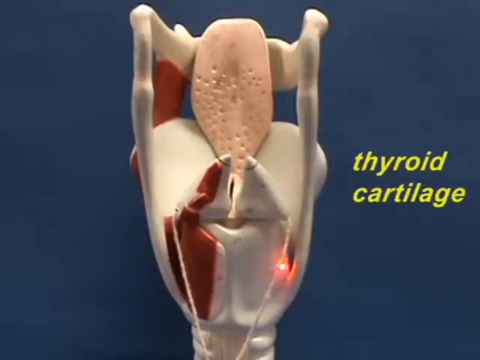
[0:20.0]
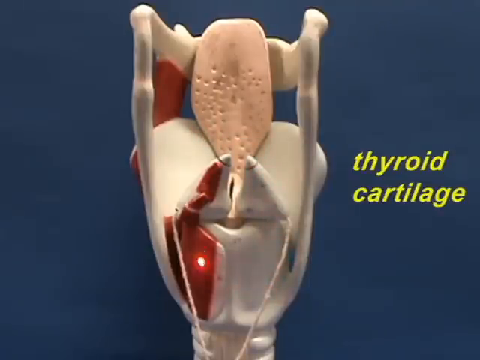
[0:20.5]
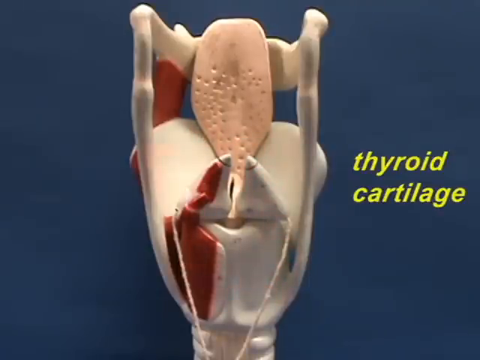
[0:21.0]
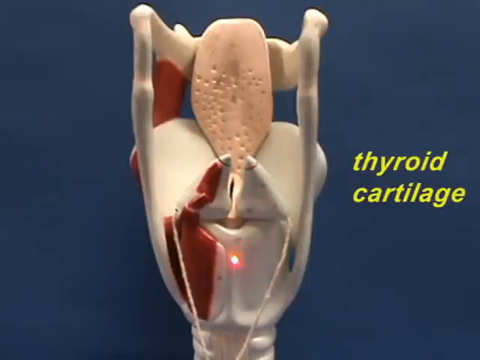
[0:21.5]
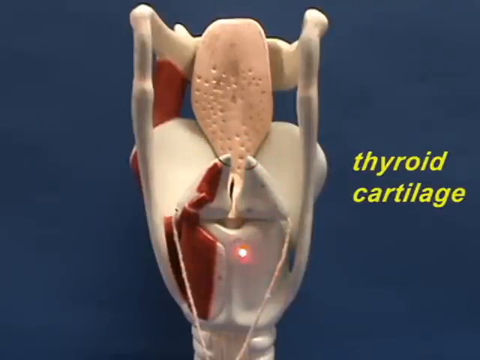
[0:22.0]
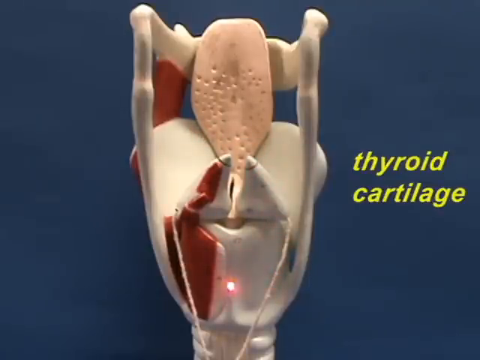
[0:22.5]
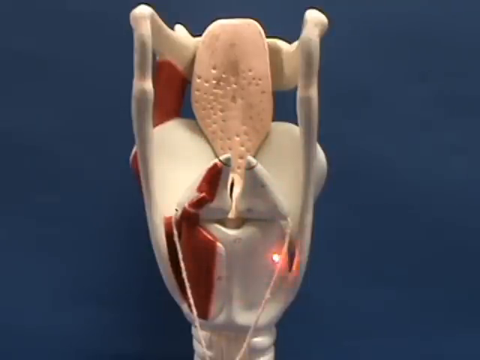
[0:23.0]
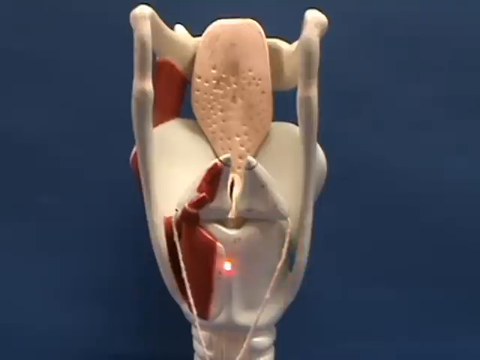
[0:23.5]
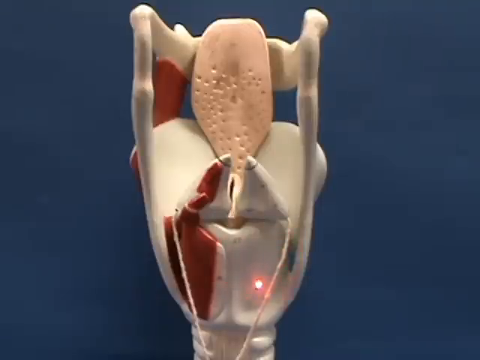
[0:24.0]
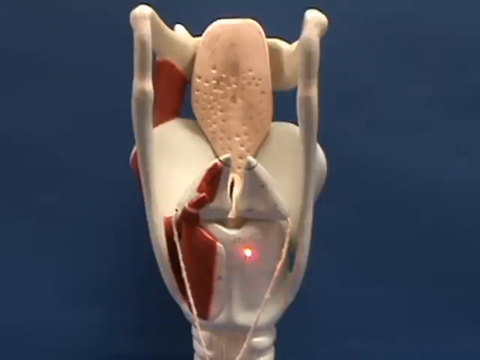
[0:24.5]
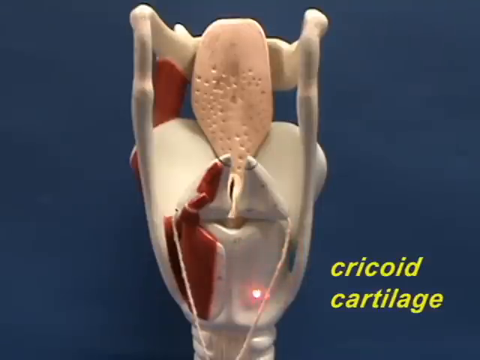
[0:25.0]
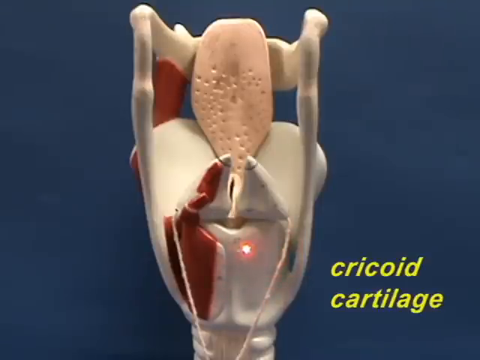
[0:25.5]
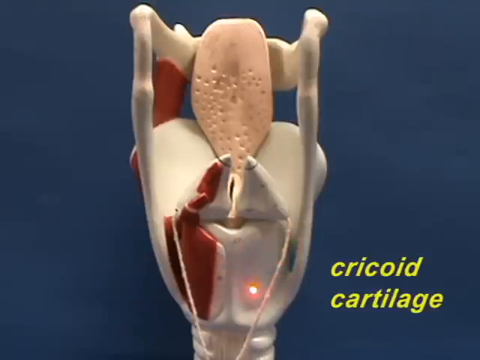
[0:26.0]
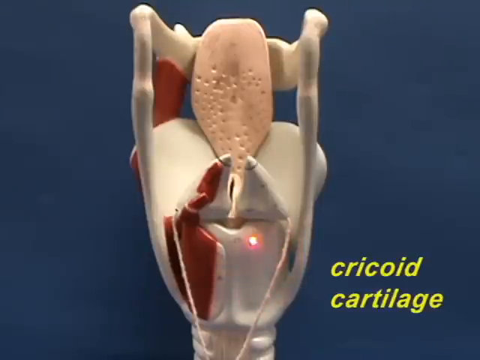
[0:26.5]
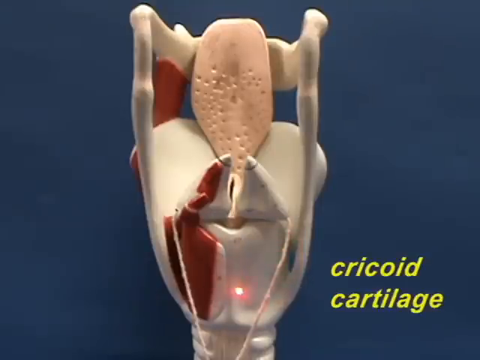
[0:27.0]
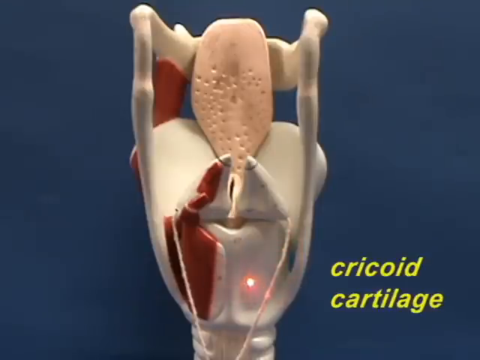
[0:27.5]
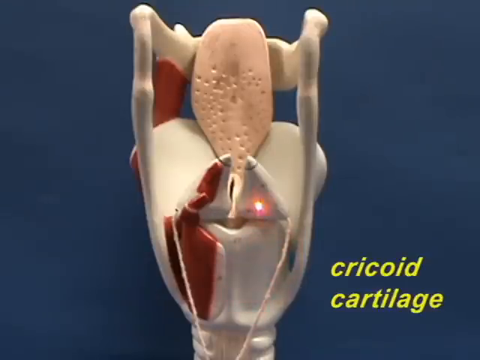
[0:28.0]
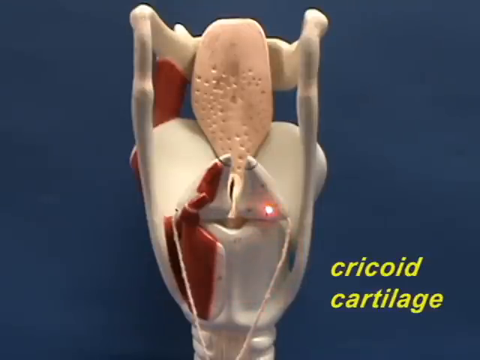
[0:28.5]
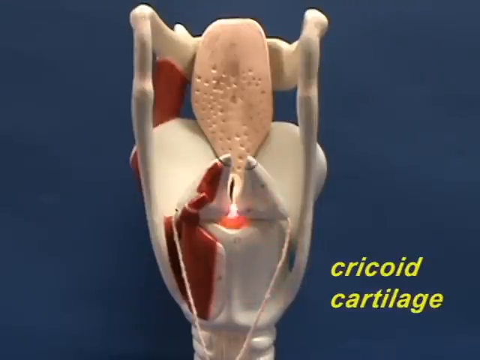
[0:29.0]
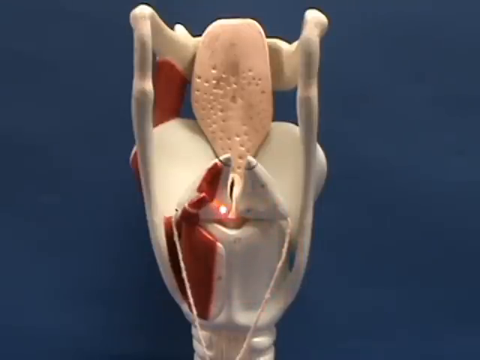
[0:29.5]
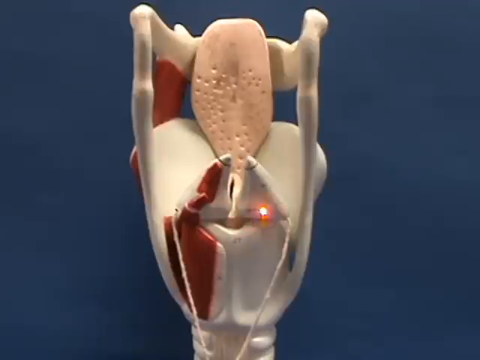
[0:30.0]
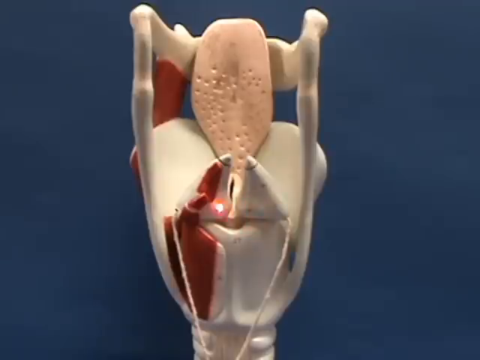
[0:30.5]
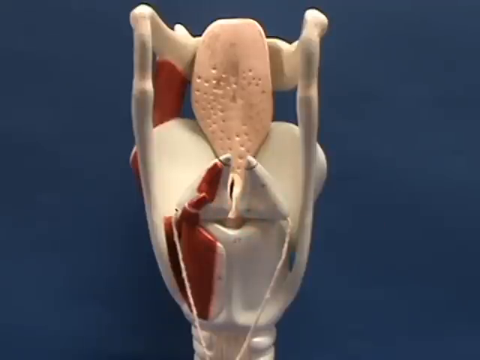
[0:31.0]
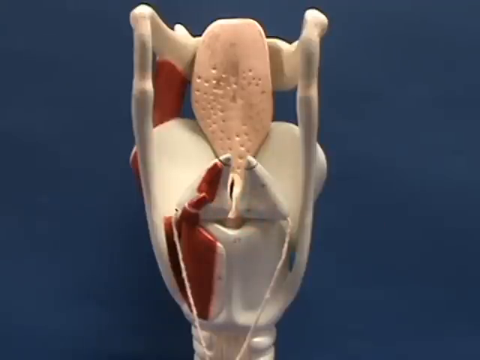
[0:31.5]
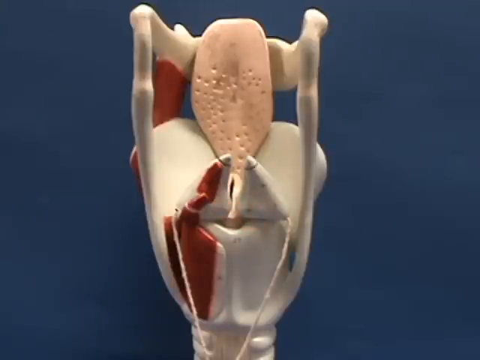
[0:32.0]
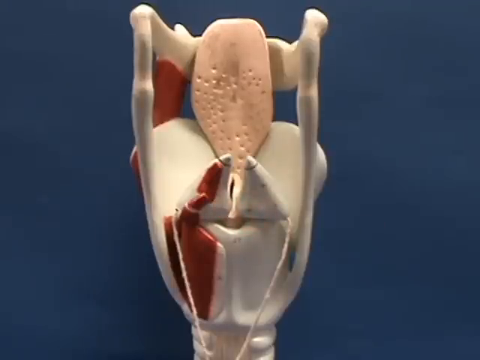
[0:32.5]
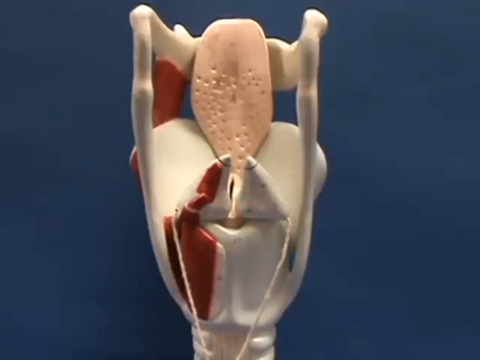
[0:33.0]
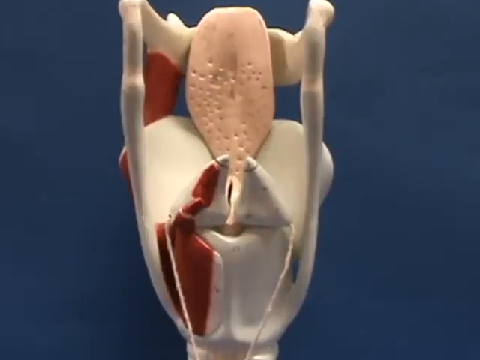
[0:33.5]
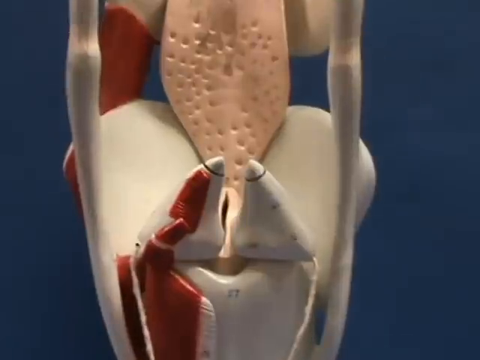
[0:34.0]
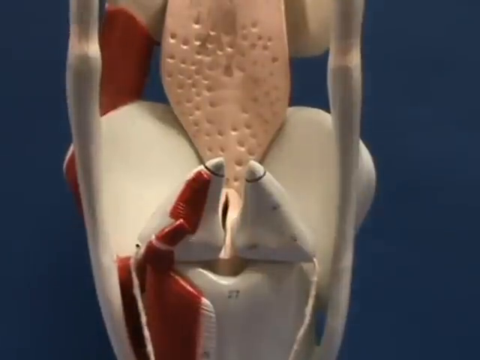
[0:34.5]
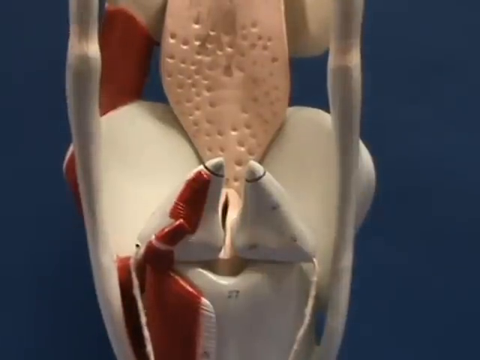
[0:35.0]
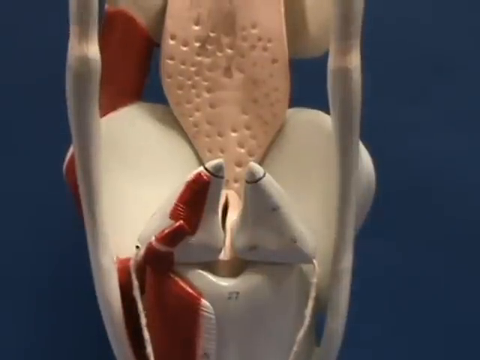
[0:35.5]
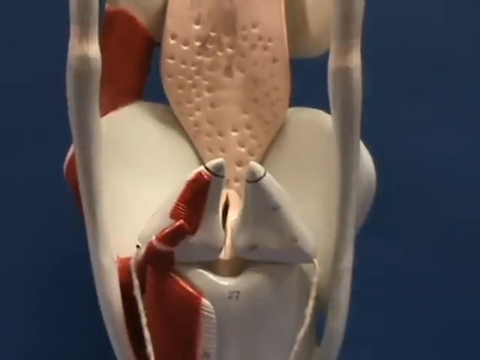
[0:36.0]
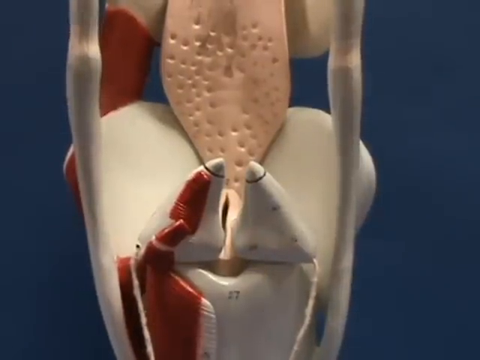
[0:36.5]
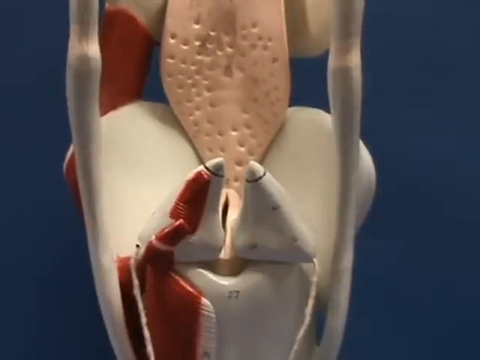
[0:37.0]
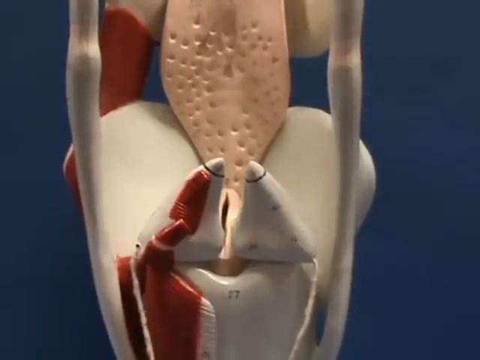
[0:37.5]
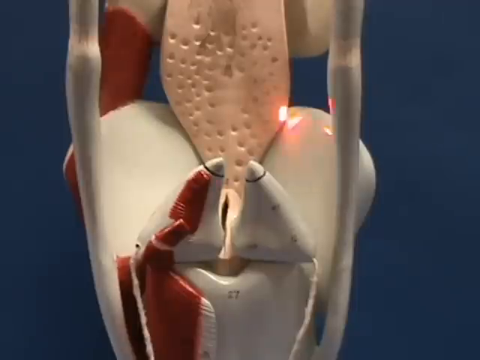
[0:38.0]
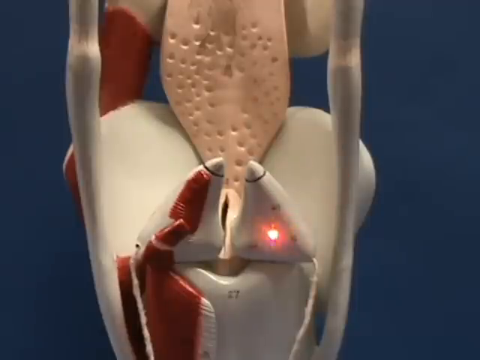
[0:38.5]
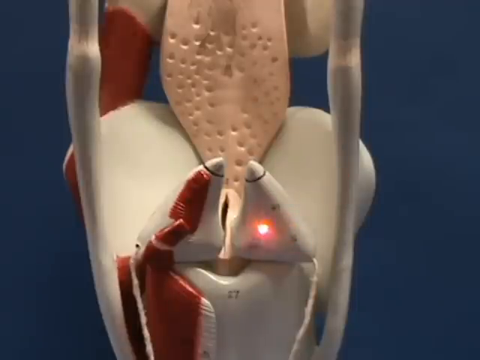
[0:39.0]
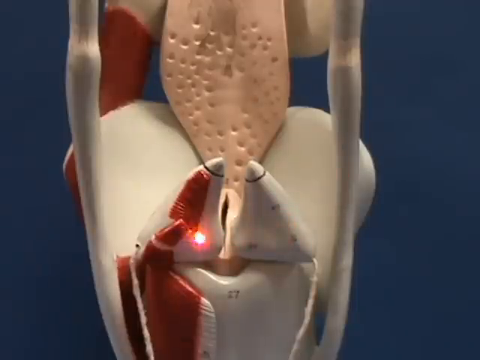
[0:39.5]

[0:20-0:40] Against a dark blue background is a larynx model showing two bones and the structures coming from the larynx. Someone with a laser pointer points to spots on the model, producing a bright red spot. The spot appears down at the bottom of the model, and the words "cricoid cartilage" pop up on the right side of the model. The person moves the laser pointer in circles. The camera then zooms in to the middle of the model, which consists of two white pieces, a left piece and a right piece, with dark red only on the left one. The person with the laser pointer places it over the red area on the left side.